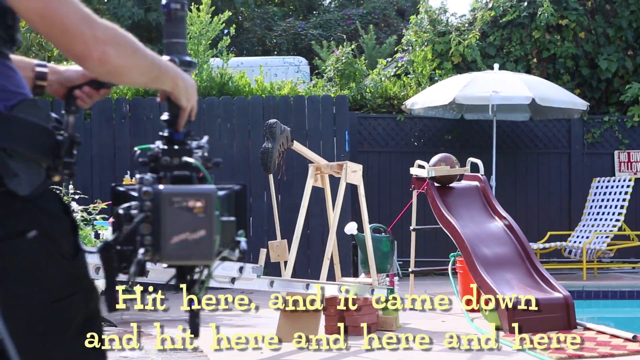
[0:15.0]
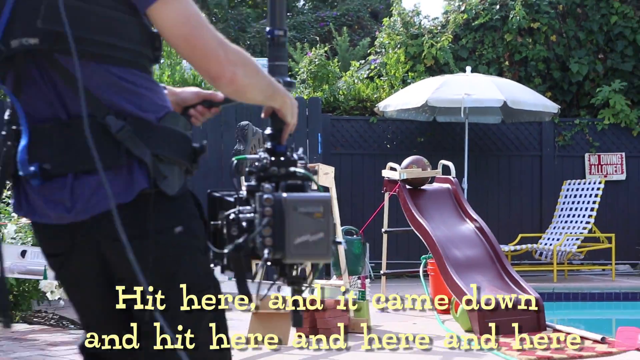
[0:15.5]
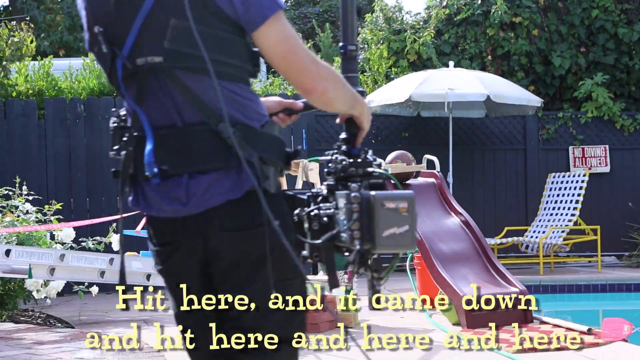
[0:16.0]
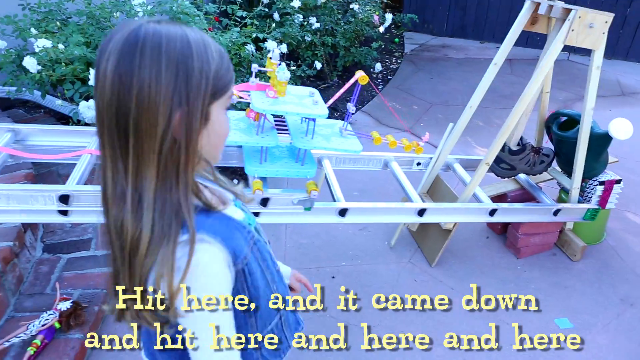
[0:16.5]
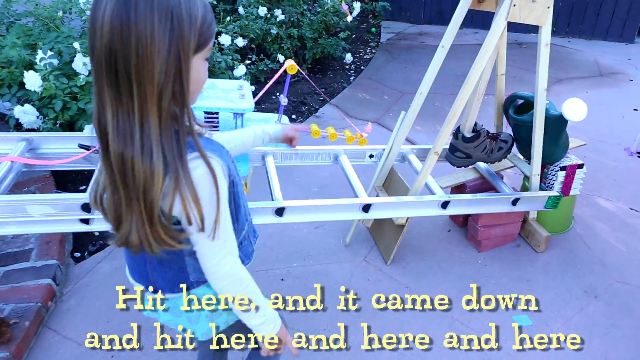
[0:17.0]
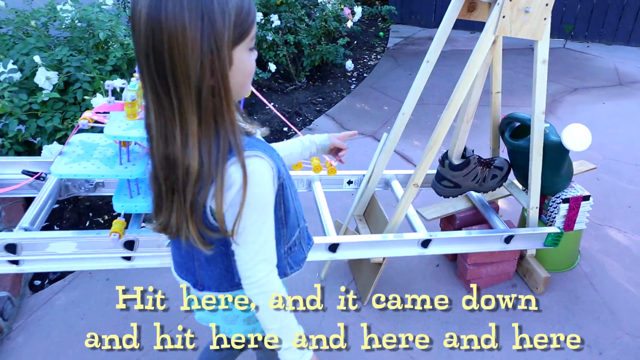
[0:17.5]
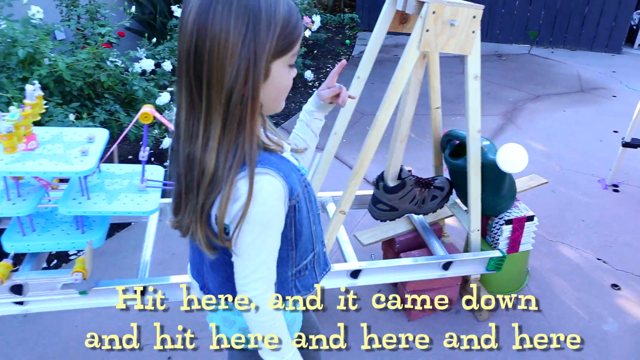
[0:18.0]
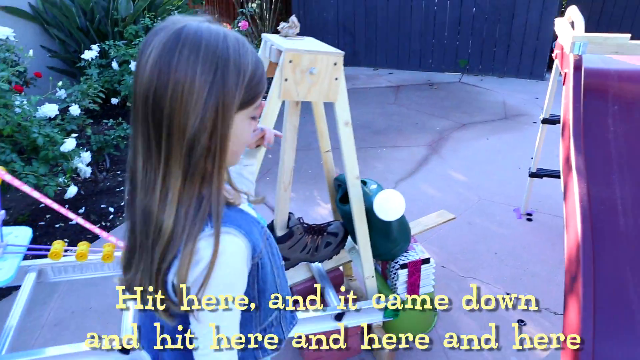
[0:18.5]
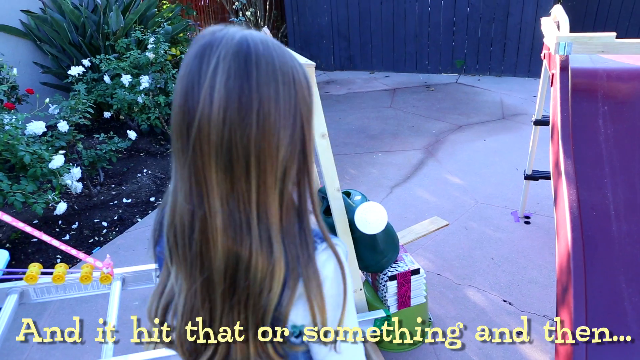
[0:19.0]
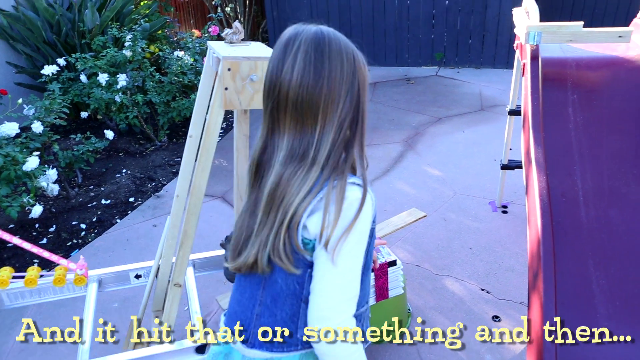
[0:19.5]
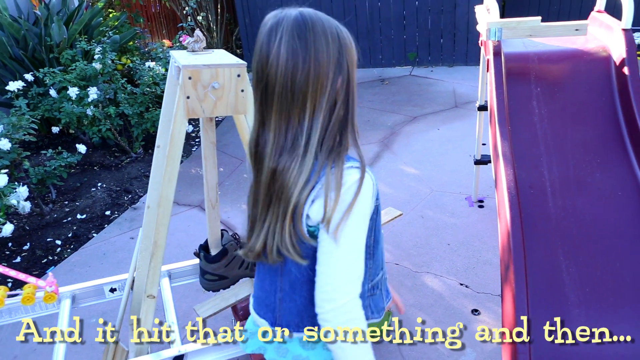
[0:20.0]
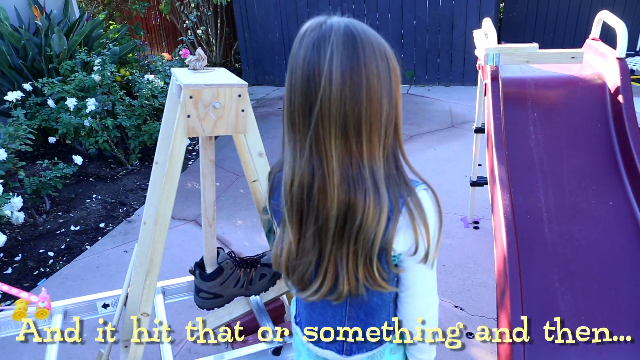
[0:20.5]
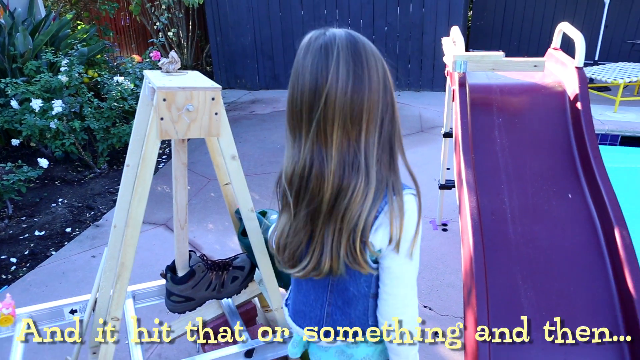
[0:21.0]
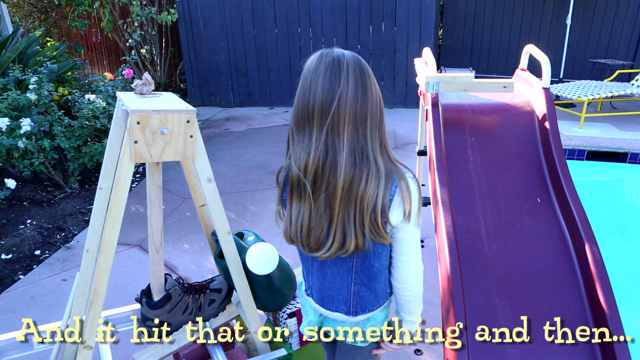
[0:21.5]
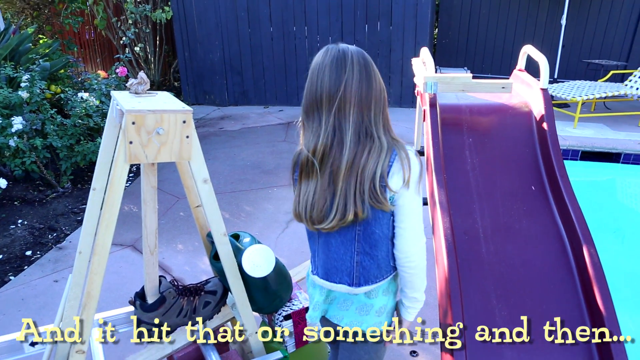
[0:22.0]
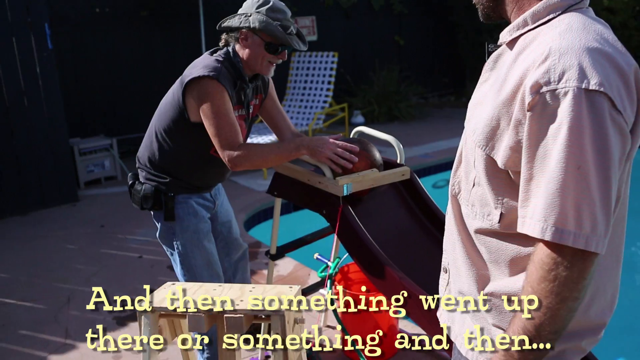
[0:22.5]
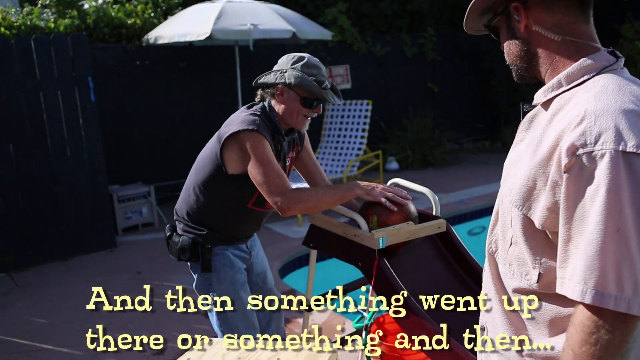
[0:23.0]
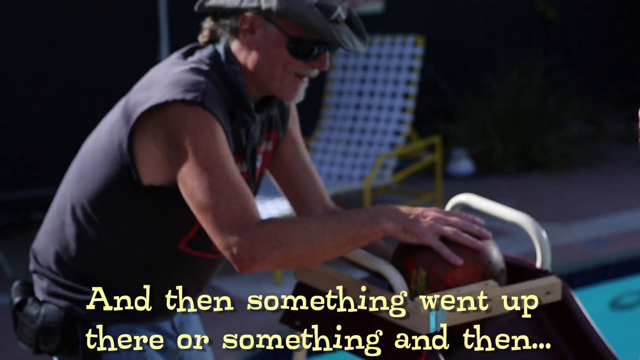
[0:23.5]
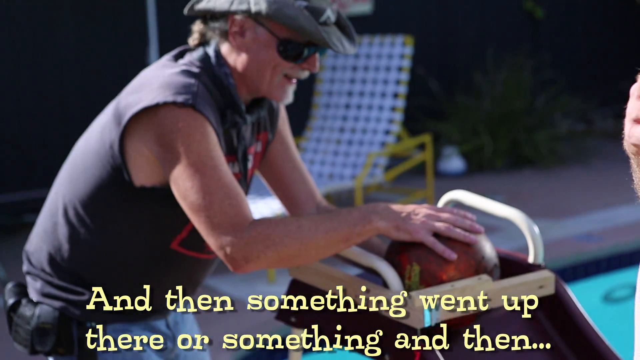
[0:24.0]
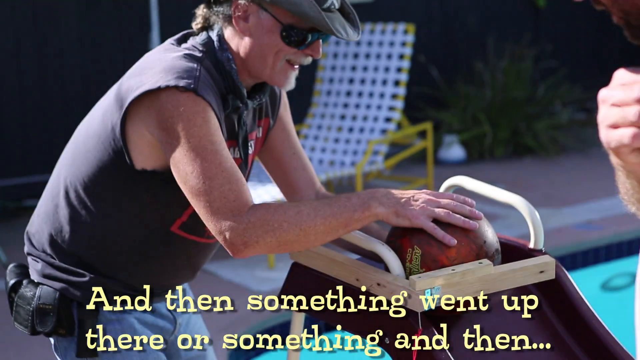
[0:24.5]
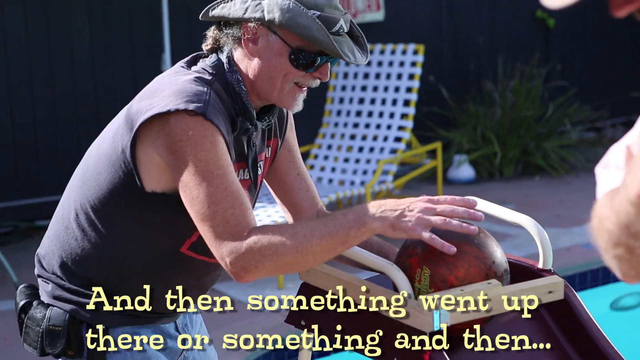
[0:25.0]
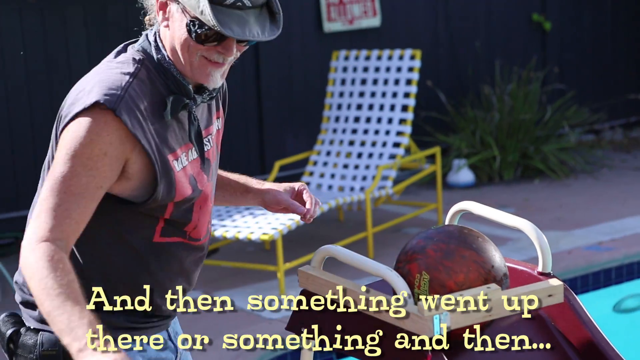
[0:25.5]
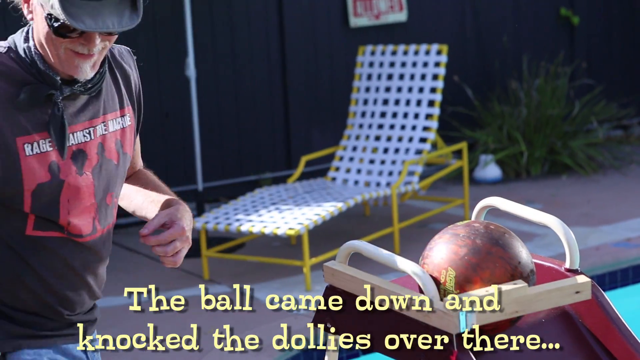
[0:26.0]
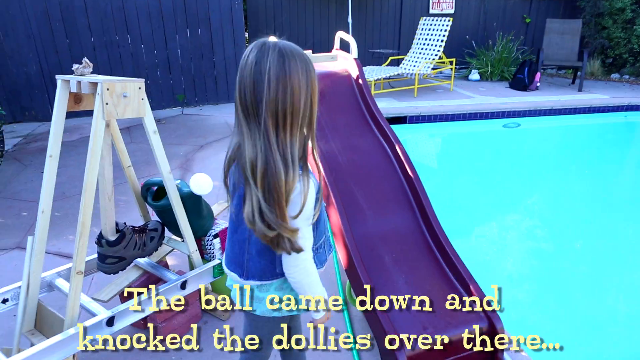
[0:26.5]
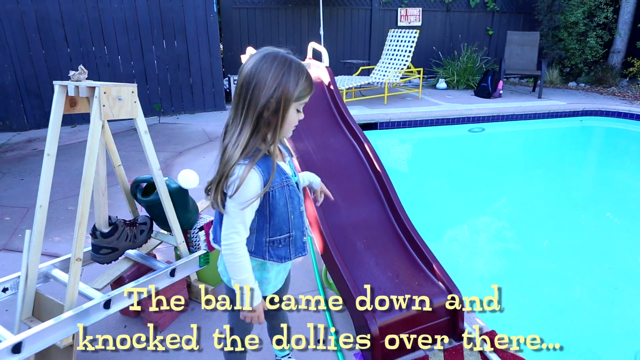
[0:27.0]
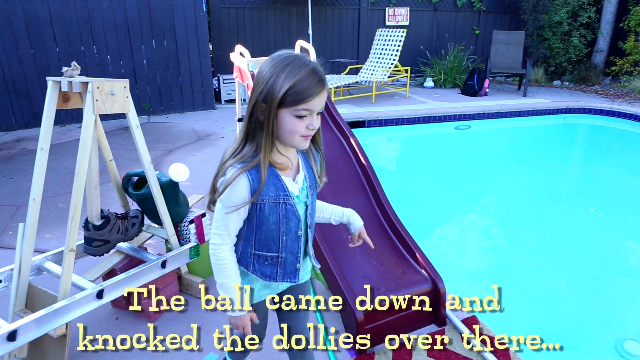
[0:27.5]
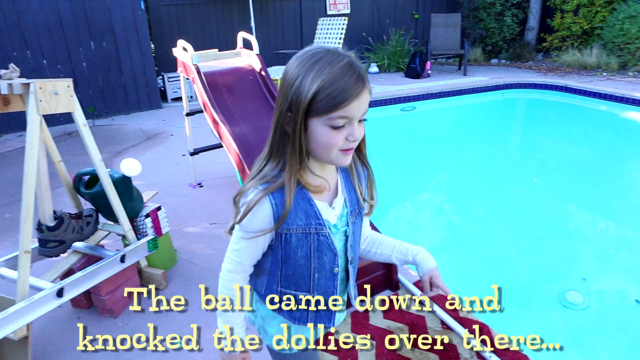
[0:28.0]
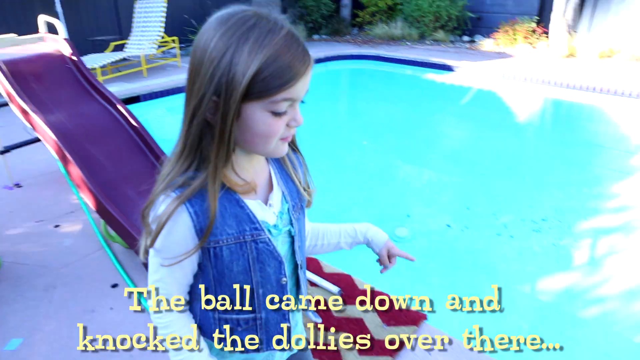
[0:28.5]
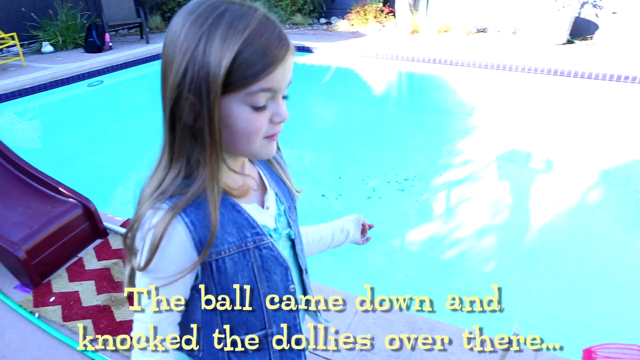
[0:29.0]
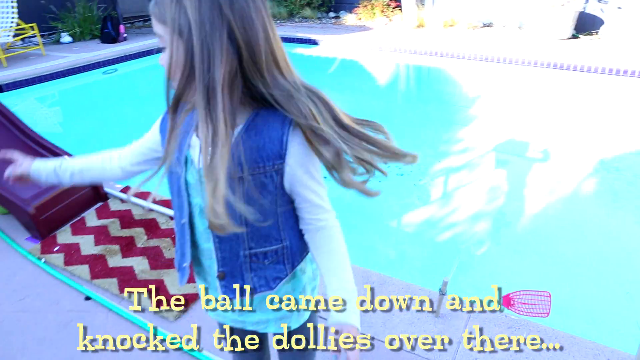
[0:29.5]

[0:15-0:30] A six-year-old girl inventor works on her invention together with a man who appears to be approximately 50 to 60 years old, with a stubbly gray beard and a cowboy hat. The man films the child working on the invention, some sort of Rube Goldberg-like machine made of a bunch of toys and other household items arranged to create a series of kinetic interactions. The girl demonstrates how the machine works, showing a boot that kicks a bowling ball on top of a slide; the bowling ball goes down the slide and interacts with some other household items. She is wearing a white blouse, a blue vest and denim jeans, and has long brown hair. The setting is a backyard with a swimming pool.